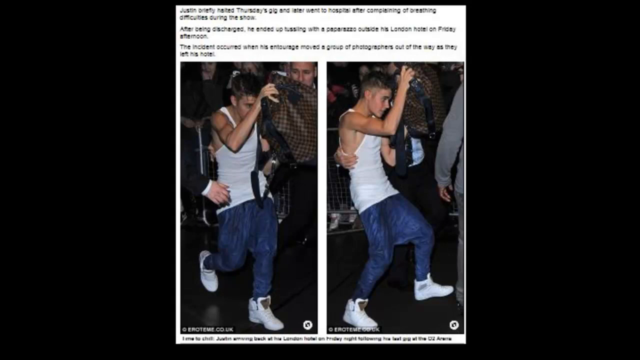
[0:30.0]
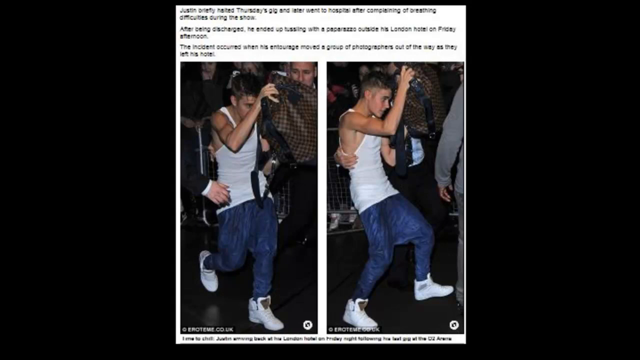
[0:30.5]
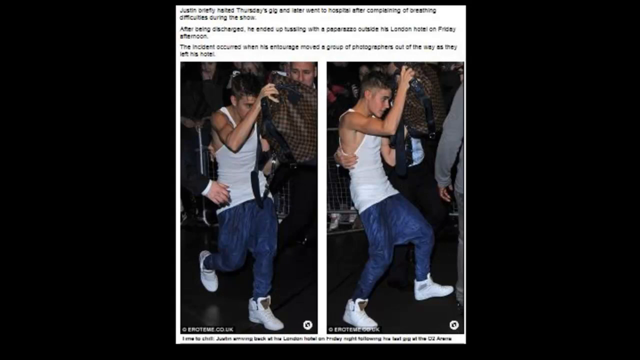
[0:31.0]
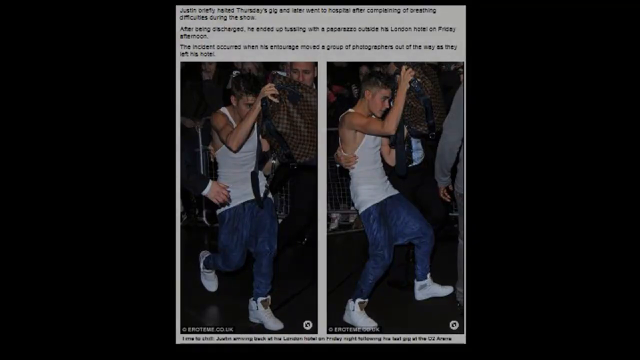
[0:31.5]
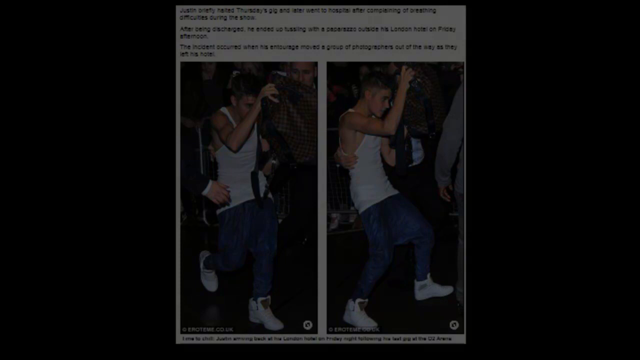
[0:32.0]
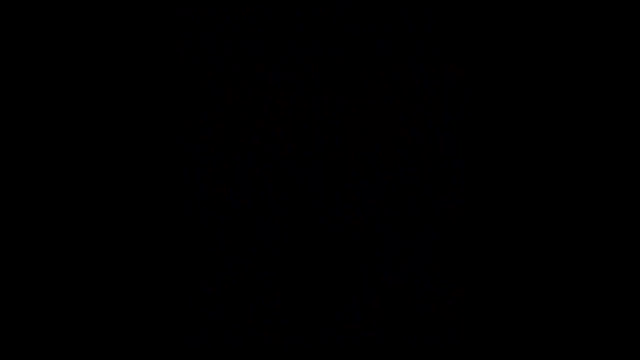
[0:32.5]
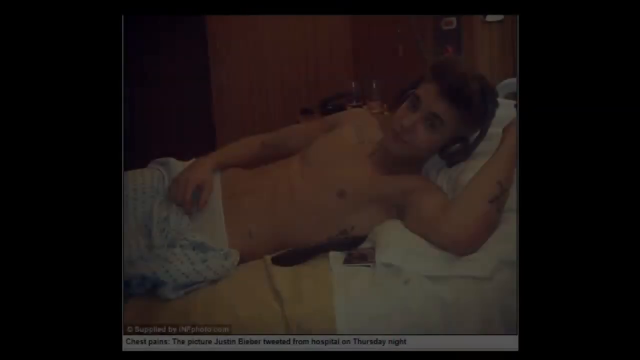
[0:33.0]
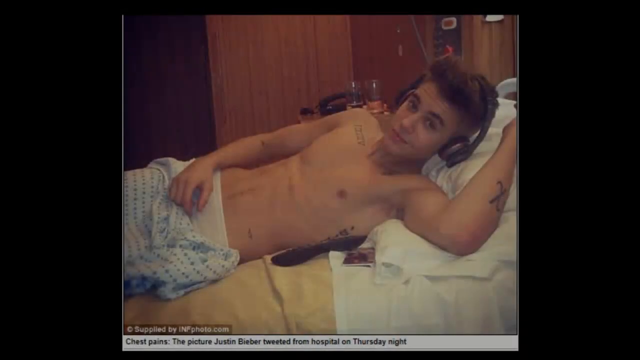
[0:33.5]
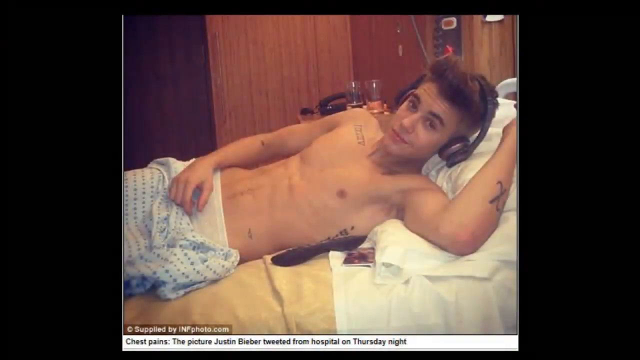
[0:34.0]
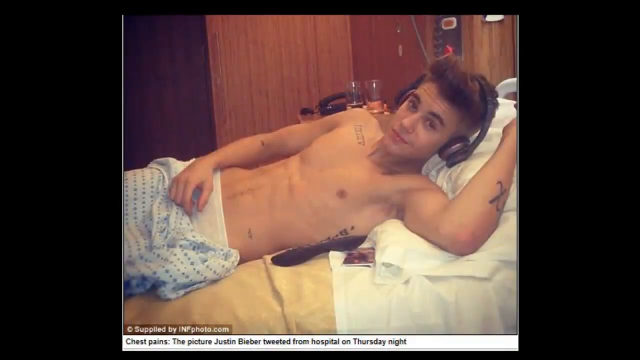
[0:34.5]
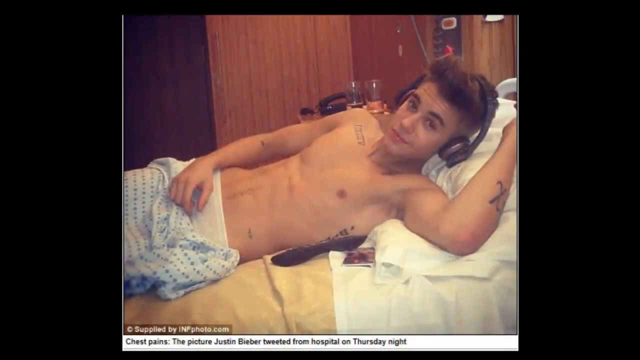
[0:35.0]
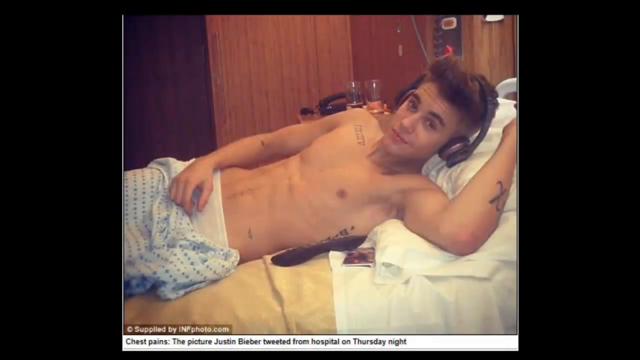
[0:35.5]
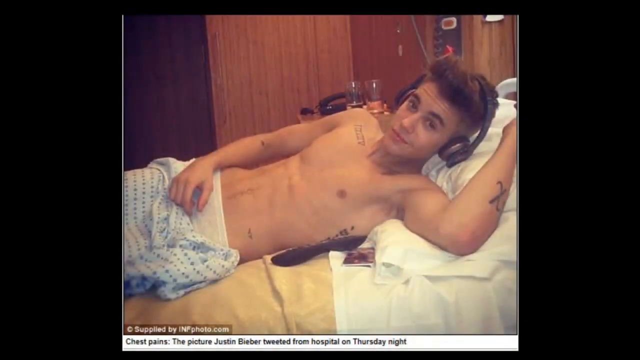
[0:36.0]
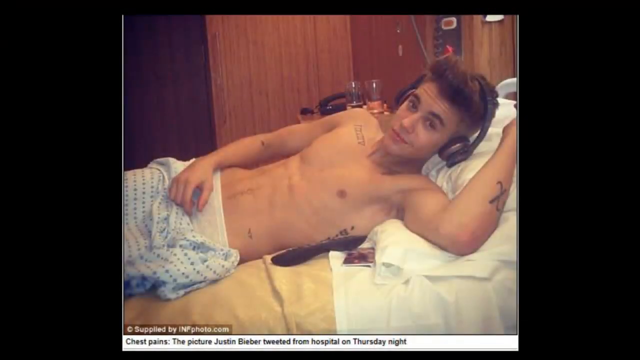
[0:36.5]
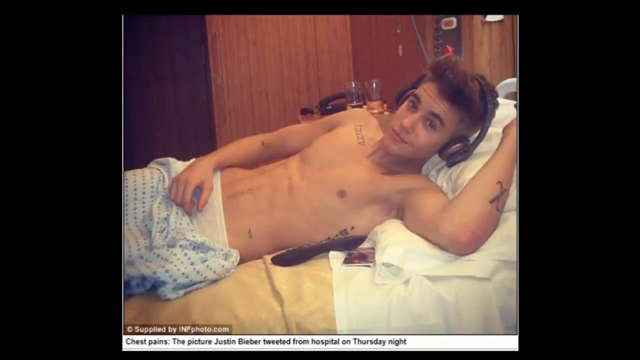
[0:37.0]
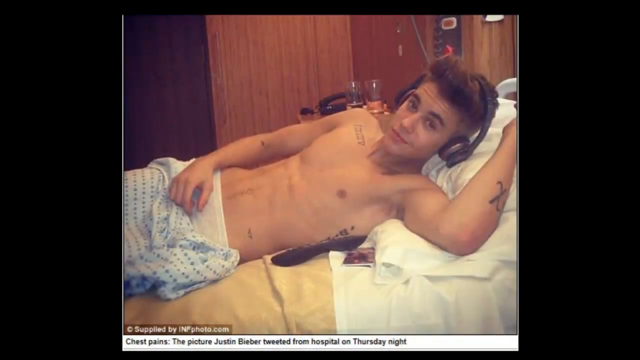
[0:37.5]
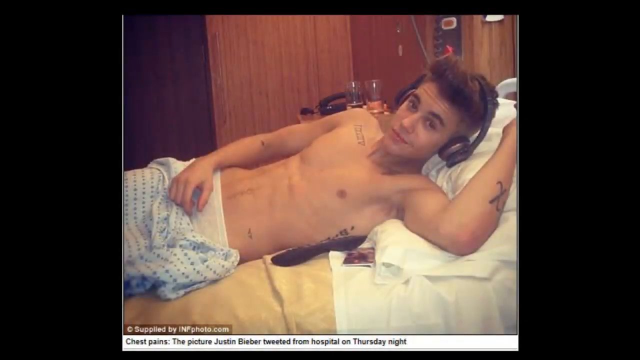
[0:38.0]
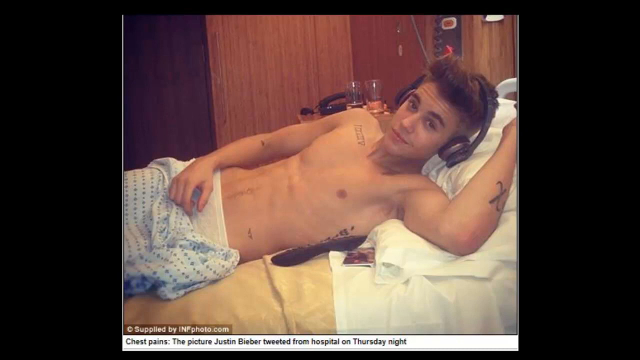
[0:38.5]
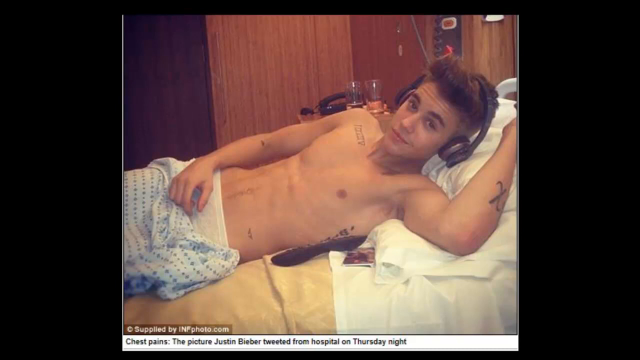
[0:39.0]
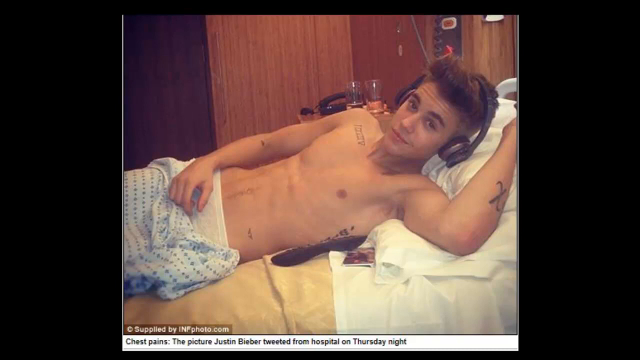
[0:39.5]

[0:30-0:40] Two images of Justin Bieber appear, one showing him with a particular type of earring. Then a video shows Justin Bieber wearing headphones and a headset. He looks very young in this video.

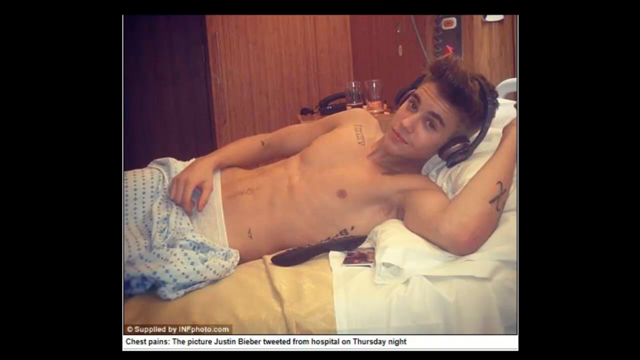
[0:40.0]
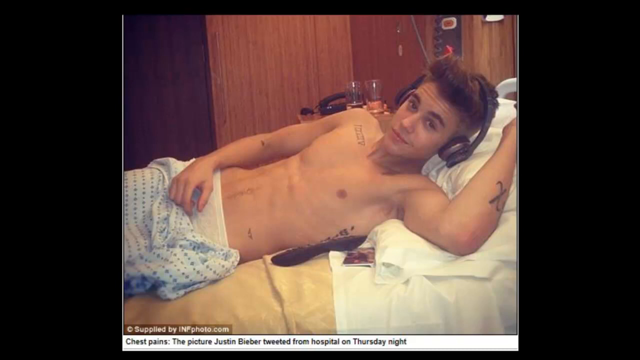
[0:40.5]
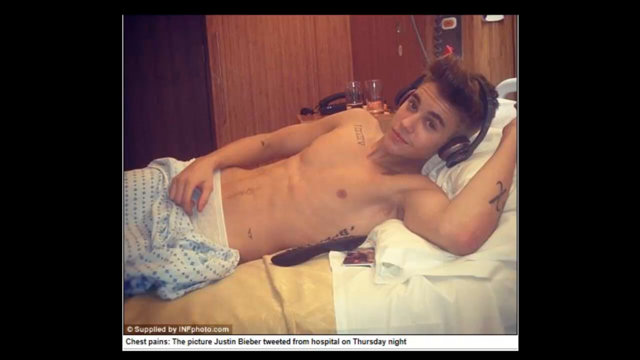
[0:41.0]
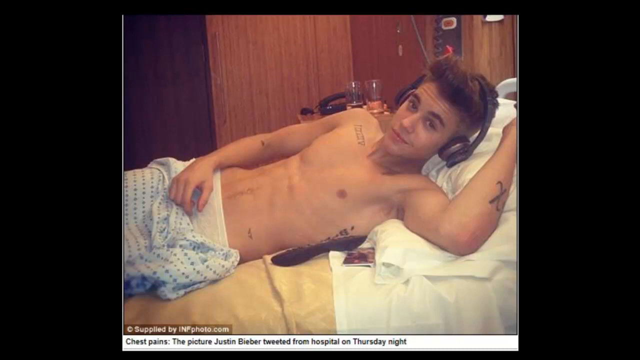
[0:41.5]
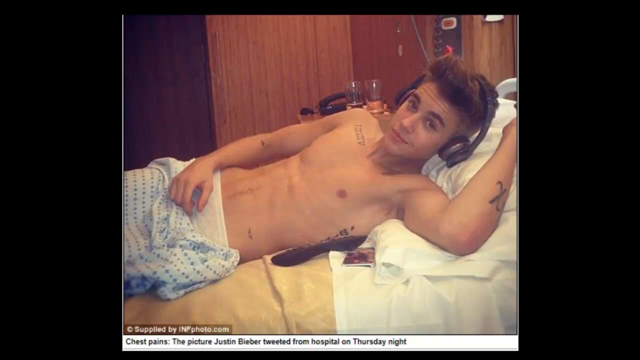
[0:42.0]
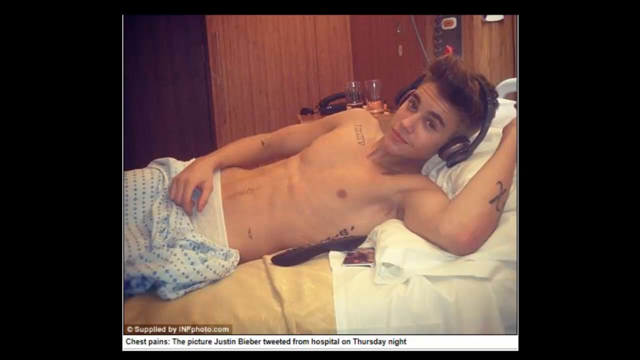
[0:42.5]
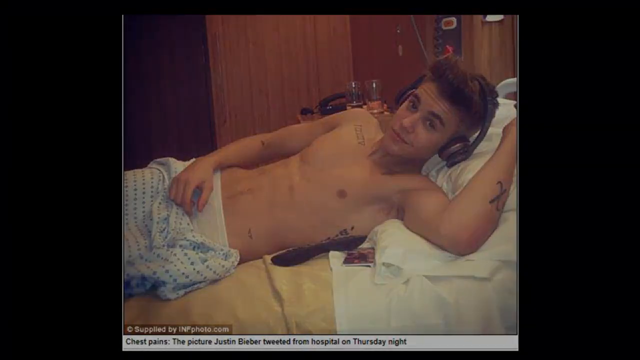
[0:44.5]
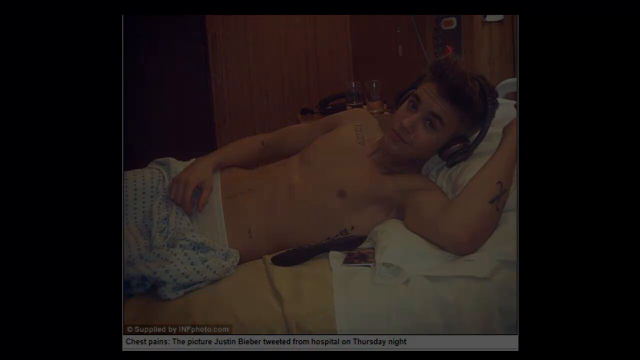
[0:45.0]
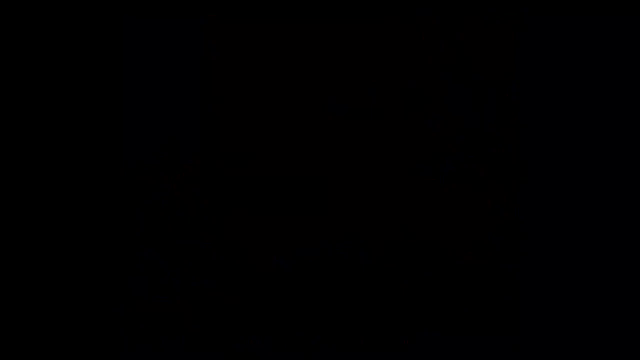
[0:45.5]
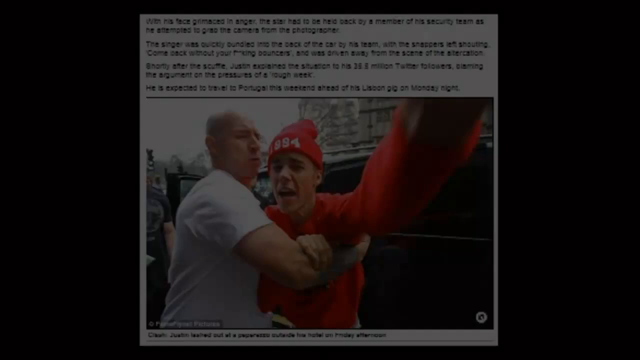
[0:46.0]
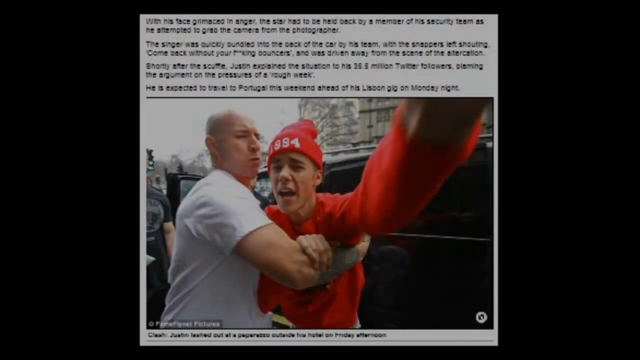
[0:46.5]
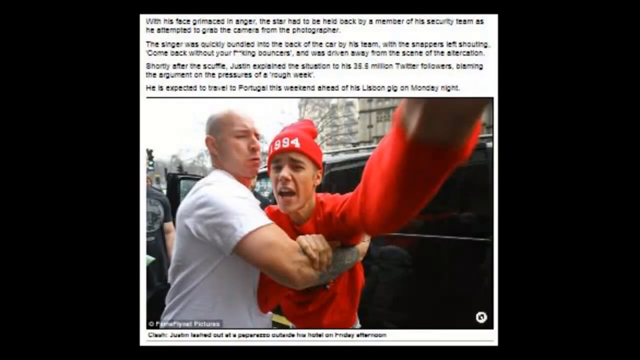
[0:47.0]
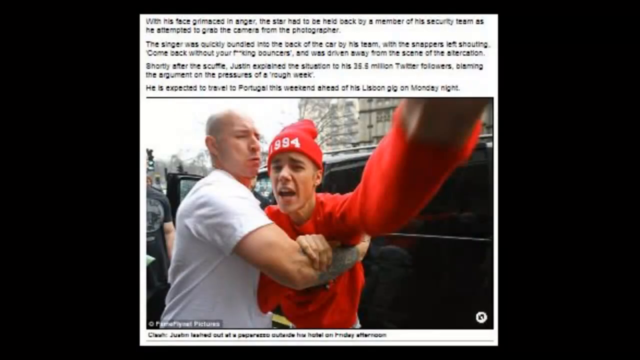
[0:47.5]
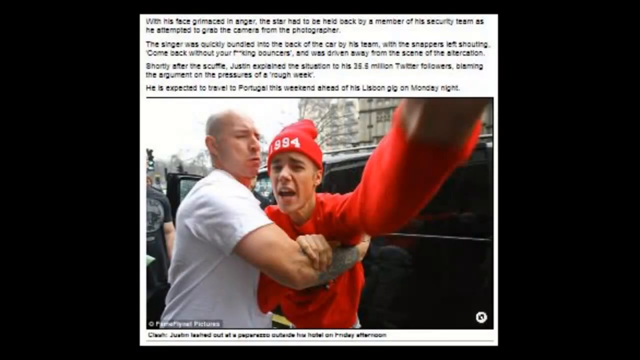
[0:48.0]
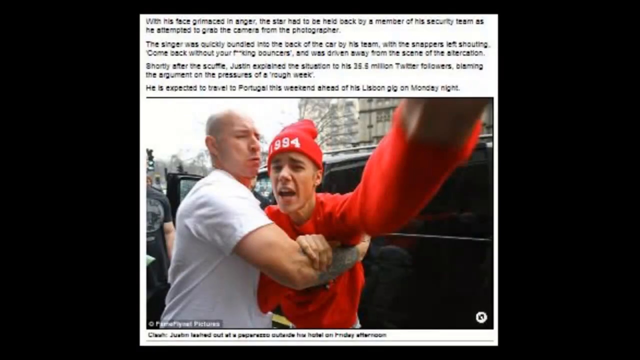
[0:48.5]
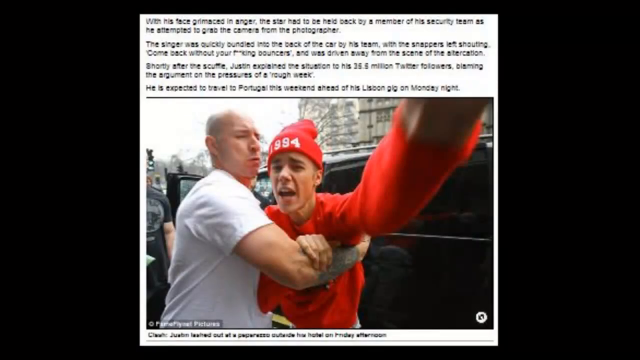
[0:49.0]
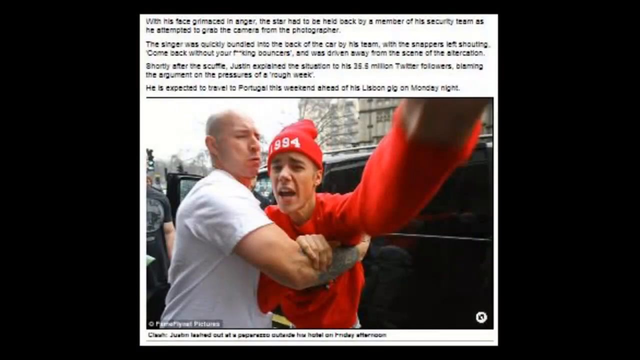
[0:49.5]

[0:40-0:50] Justin Bieber is not wearing a shirt. Another scene shows Justin wearing a red shirt and a red hat, and he looks very angry.